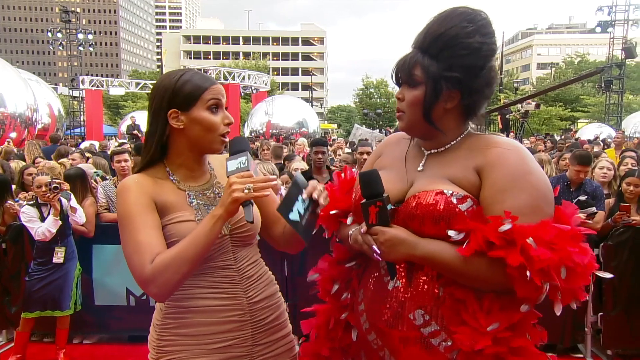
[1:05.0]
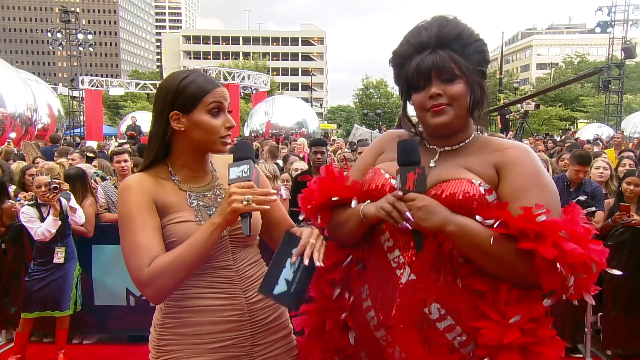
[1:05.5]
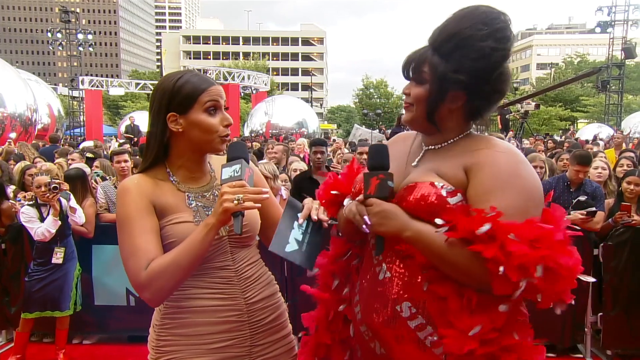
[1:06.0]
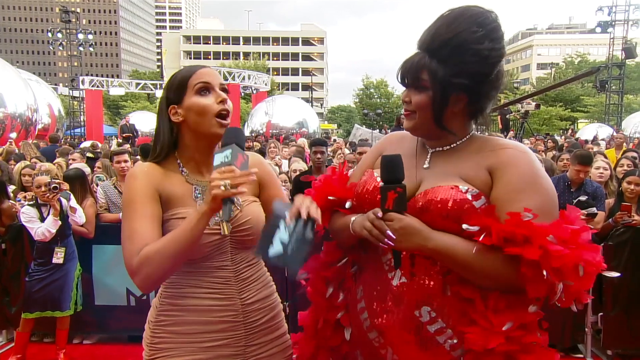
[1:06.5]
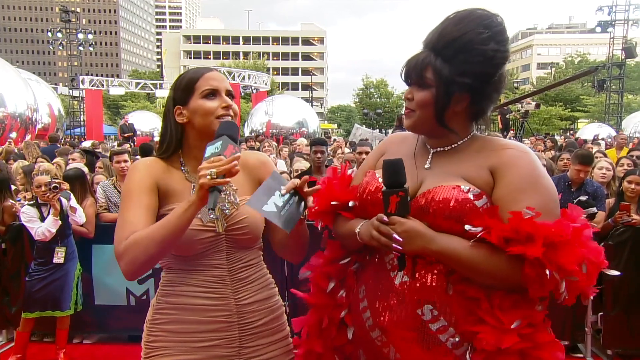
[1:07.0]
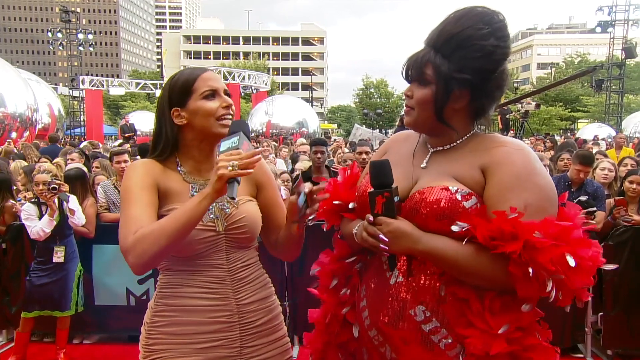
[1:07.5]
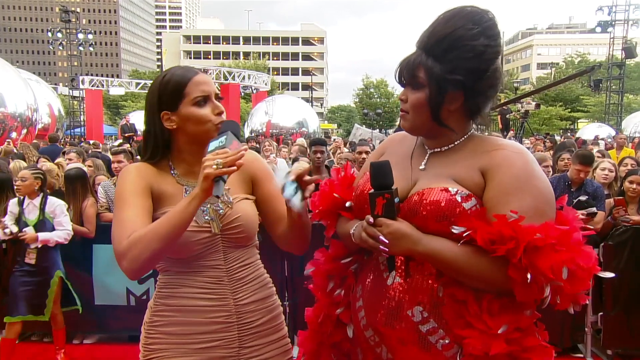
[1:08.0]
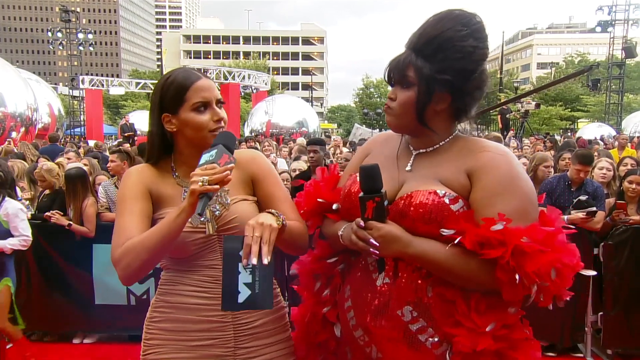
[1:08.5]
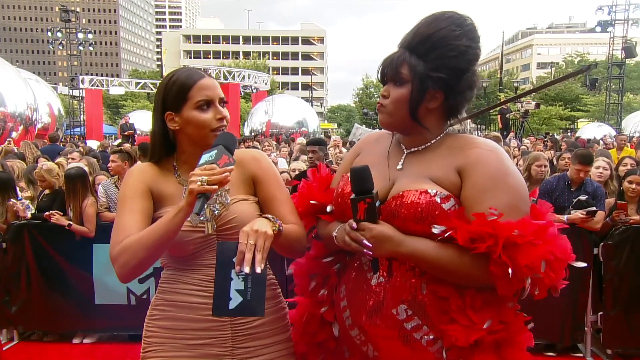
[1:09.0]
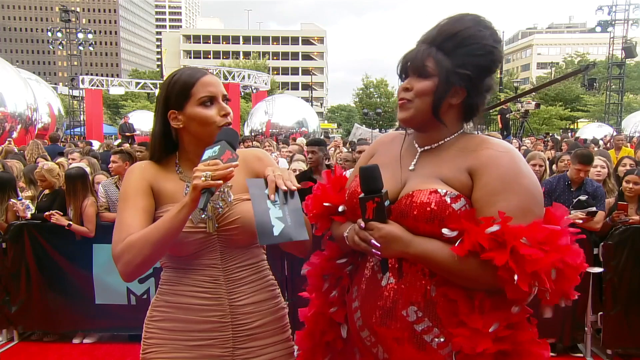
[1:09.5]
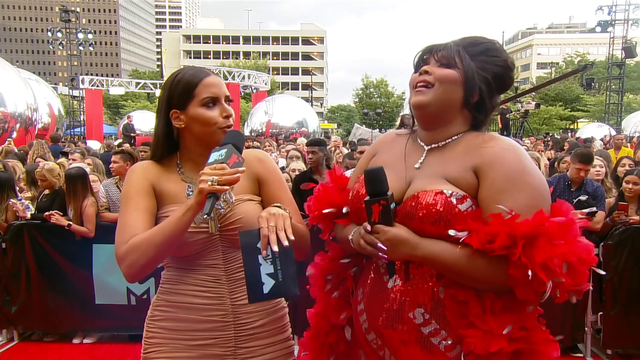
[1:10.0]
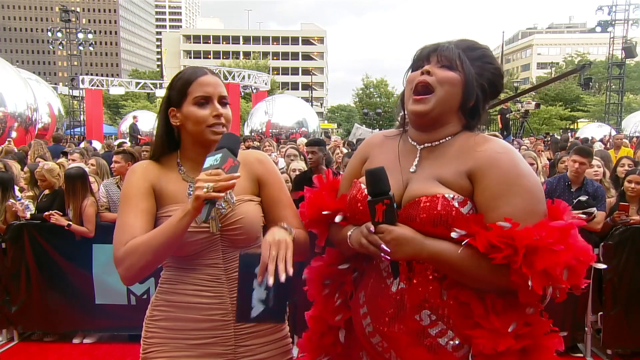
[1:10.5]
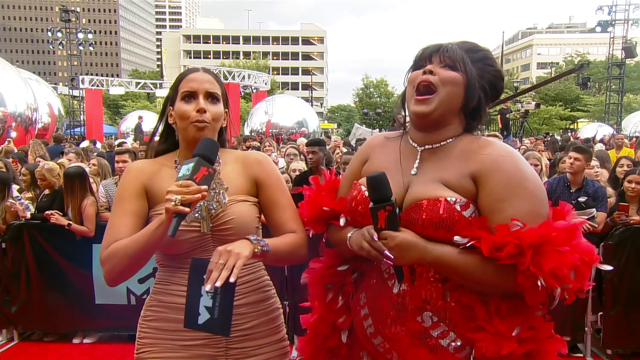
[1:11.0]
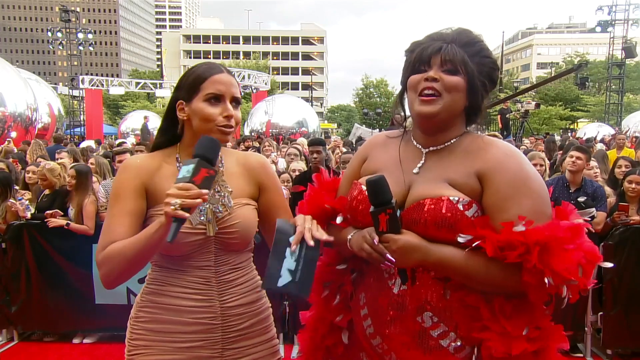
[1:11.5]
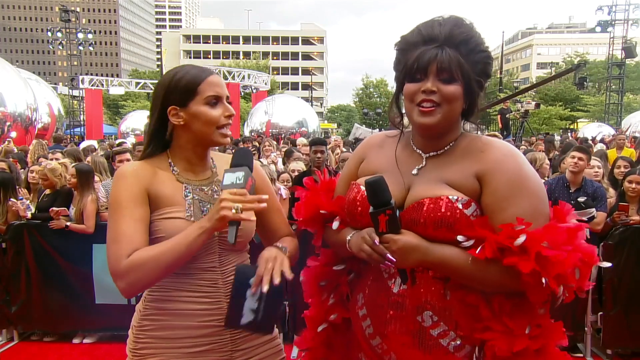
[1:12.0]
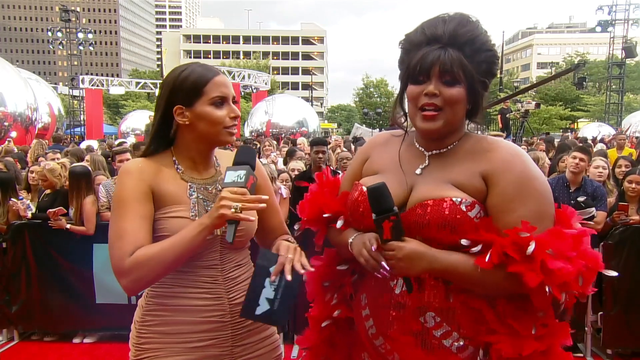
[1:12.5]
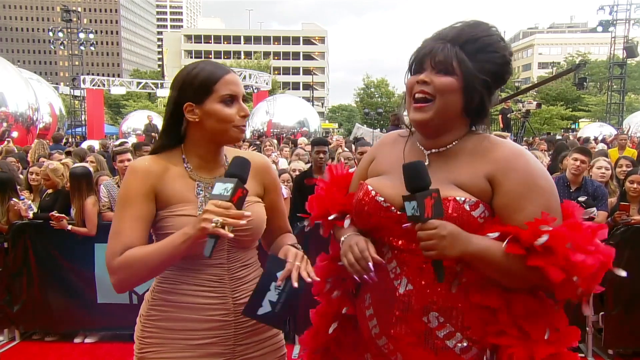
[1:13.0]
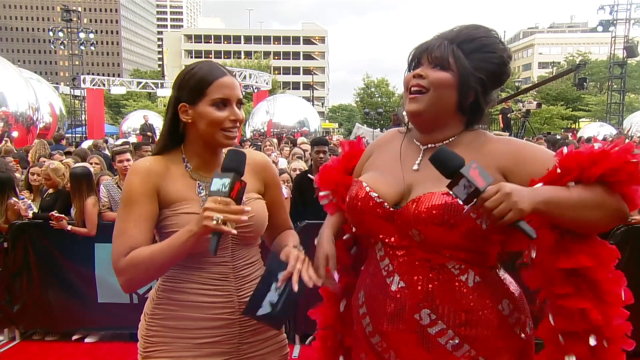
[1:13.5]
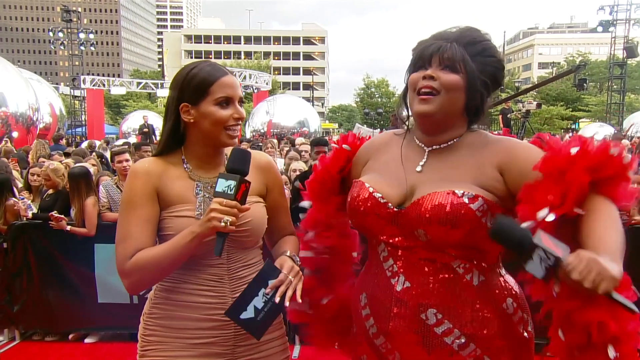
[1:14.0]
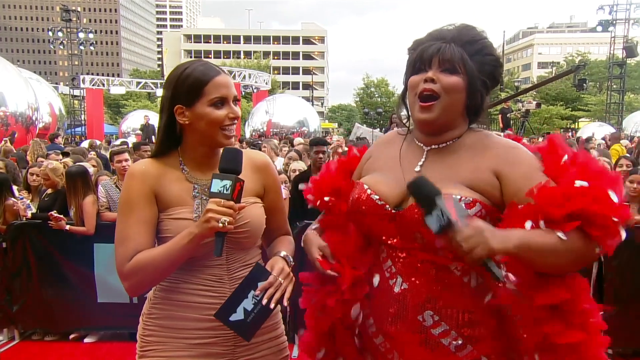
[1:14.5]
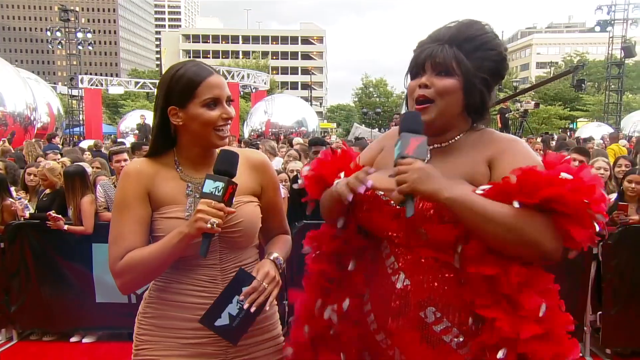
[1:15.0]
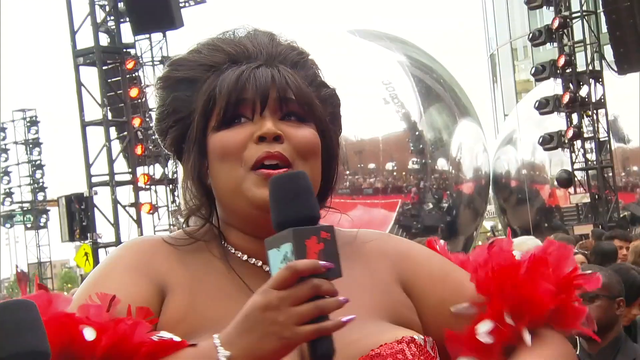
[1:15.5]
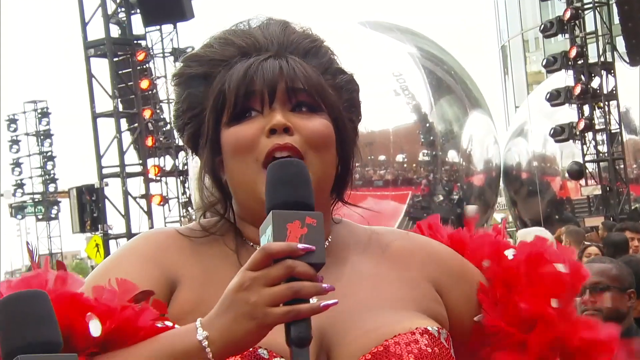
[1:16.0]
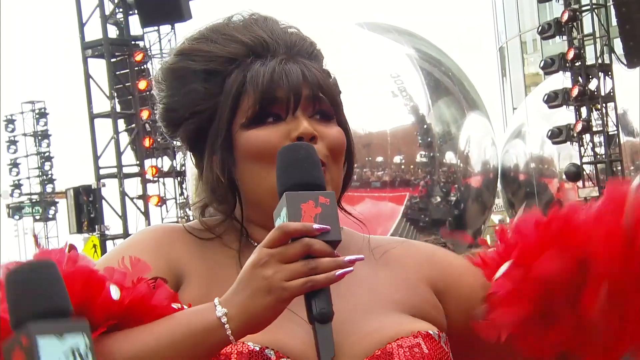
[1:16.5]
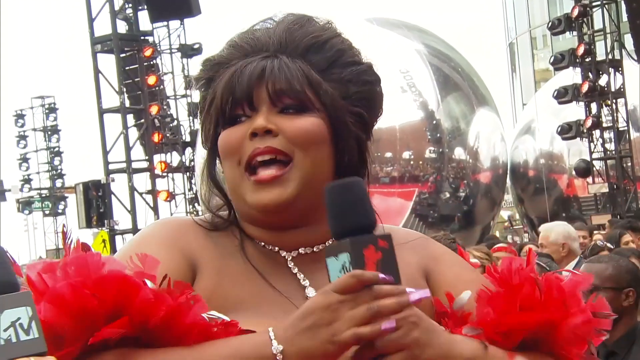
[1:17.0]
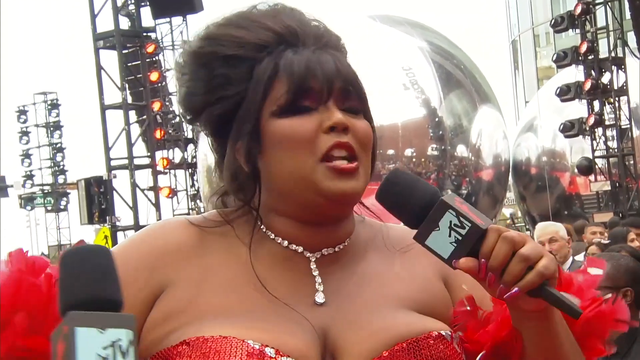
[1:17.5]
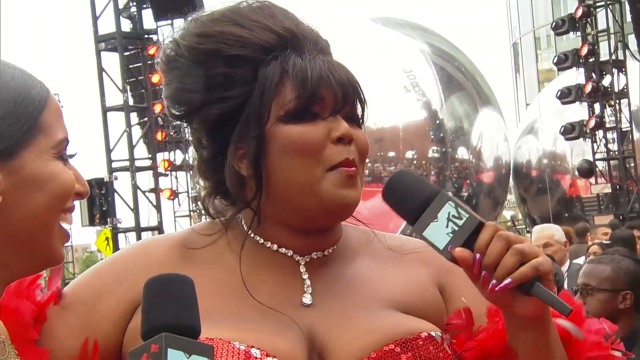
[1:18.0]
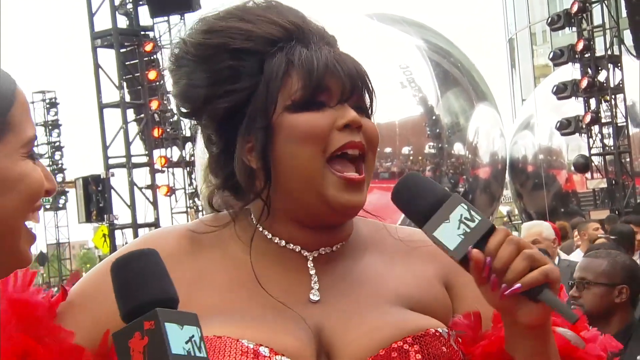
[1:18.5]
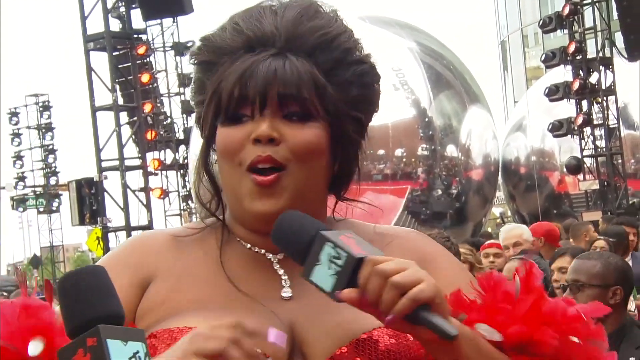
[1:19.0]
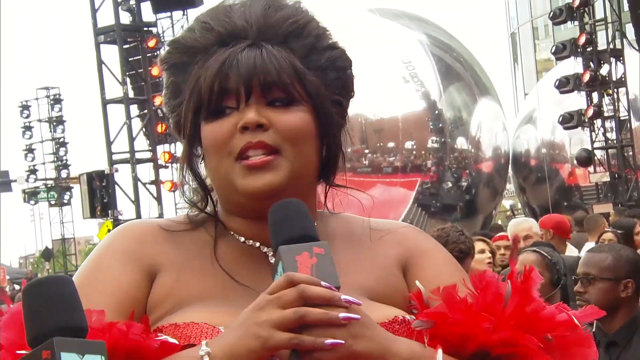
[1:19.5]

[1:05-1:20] Behind Lizzo there is a lot of scaffolding with different lights on it, and huge reflective silver spheres that look about 10 feet tall appear to be scattered throughout the crowds. The interview continues, with the woman still gesturing with her hands and asking questions. Lizzo opens her mouth very wide and looks up as if saying "ah," then kind of flaps her arms and readjusts her red boa over her shoulders.